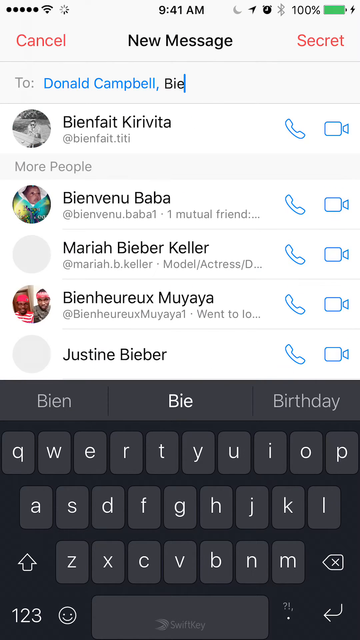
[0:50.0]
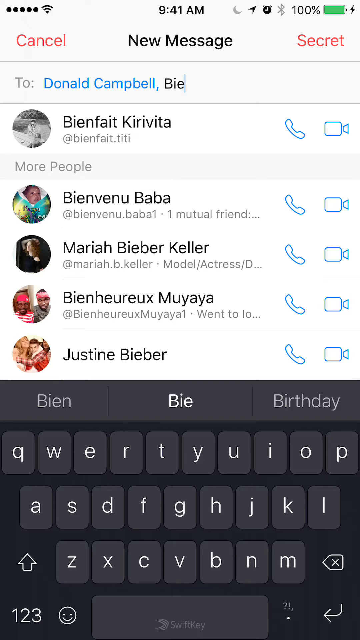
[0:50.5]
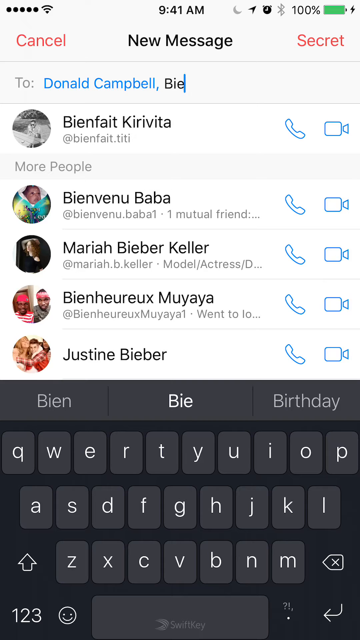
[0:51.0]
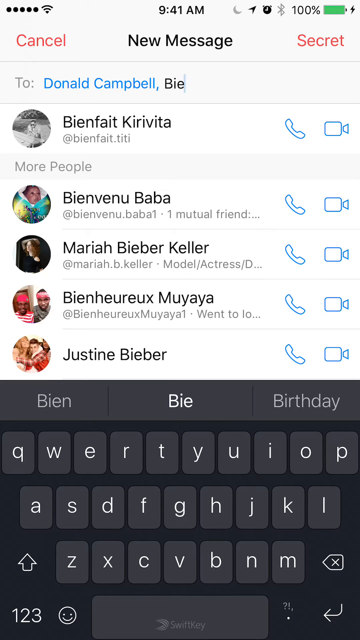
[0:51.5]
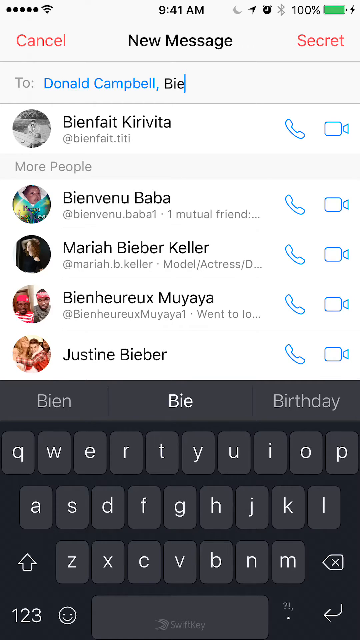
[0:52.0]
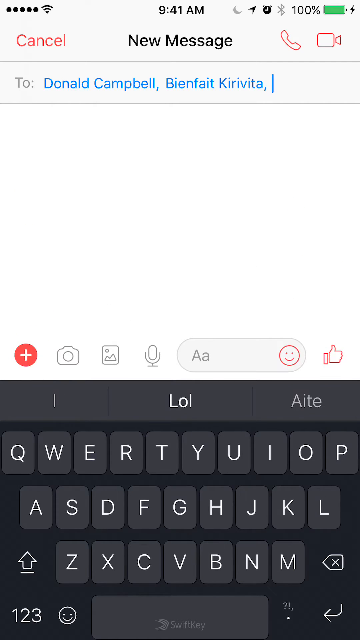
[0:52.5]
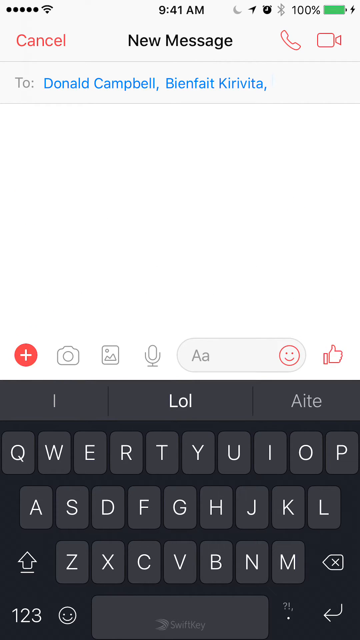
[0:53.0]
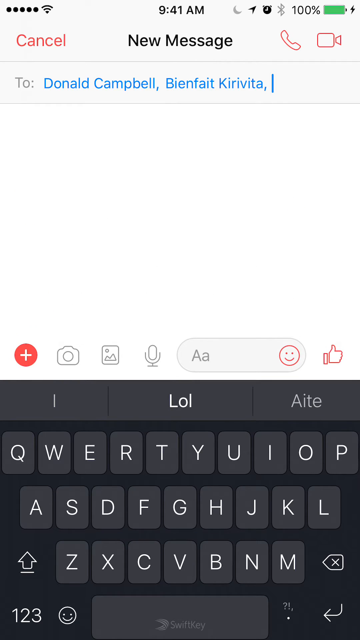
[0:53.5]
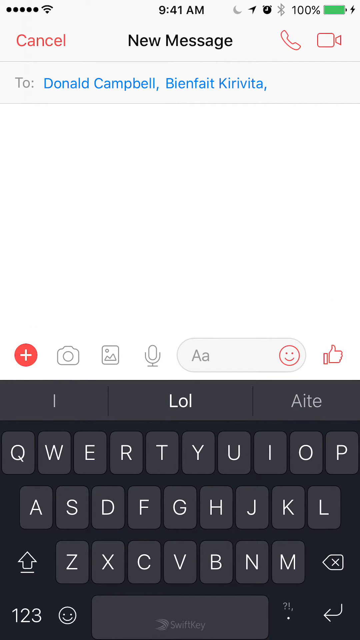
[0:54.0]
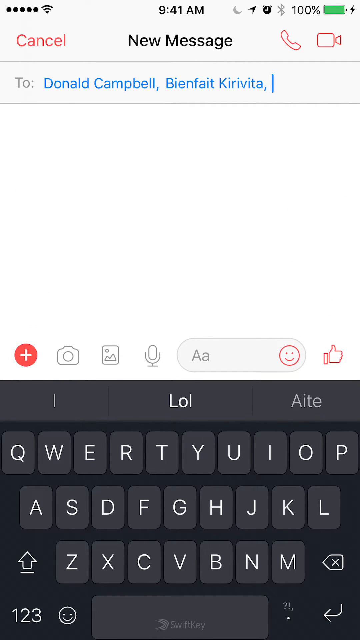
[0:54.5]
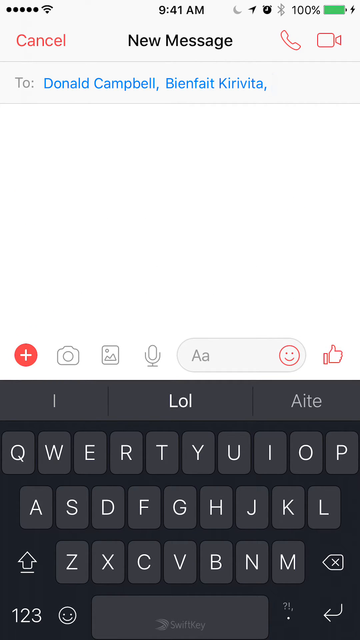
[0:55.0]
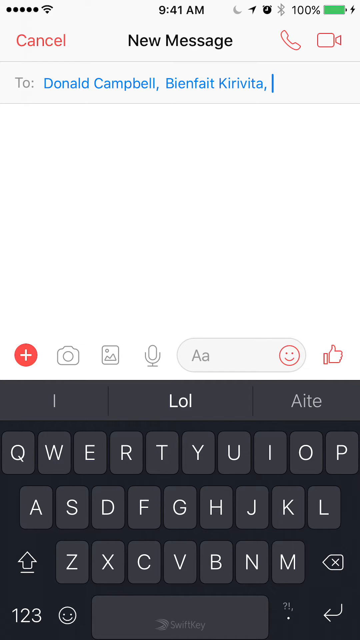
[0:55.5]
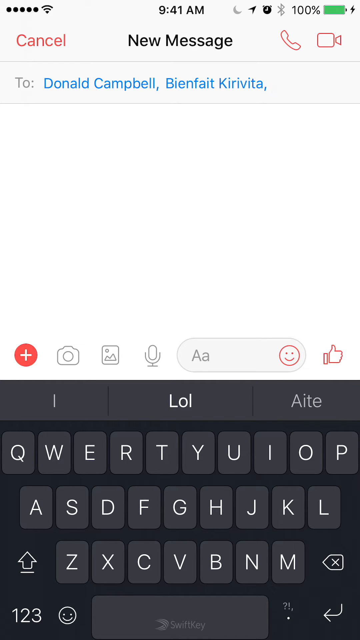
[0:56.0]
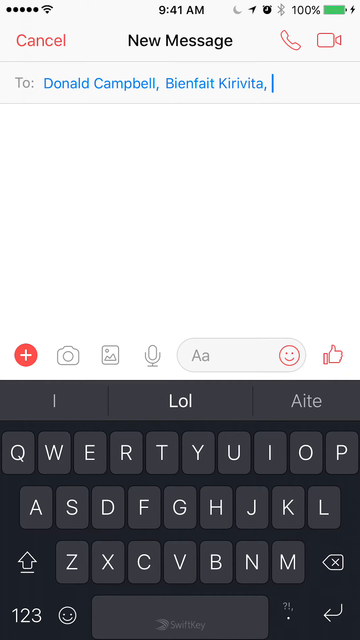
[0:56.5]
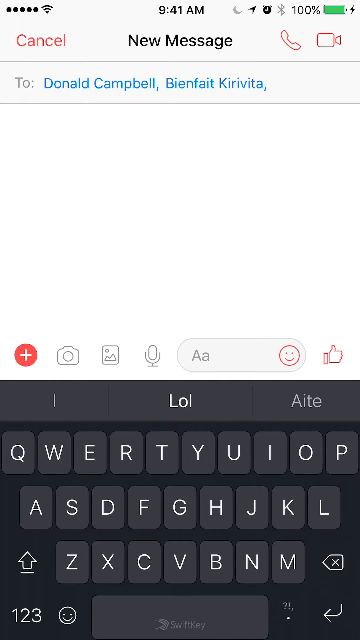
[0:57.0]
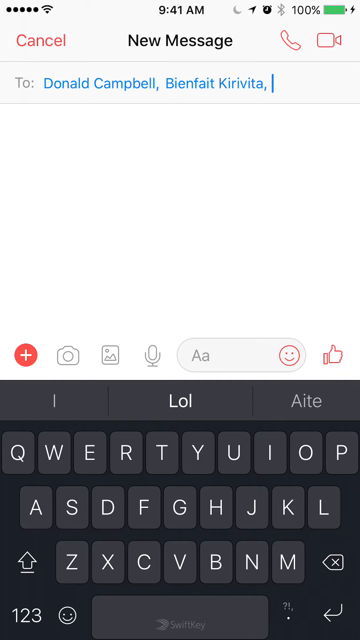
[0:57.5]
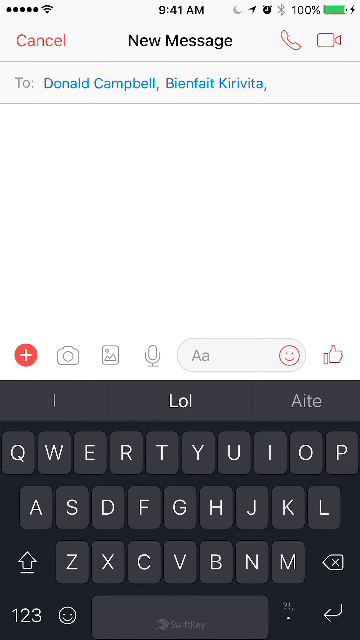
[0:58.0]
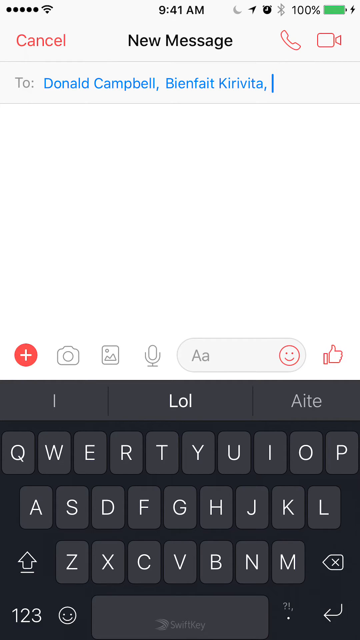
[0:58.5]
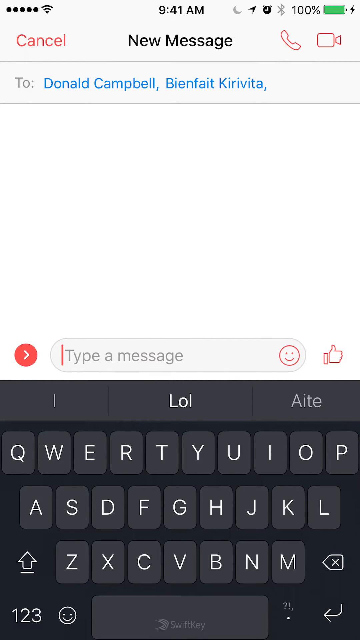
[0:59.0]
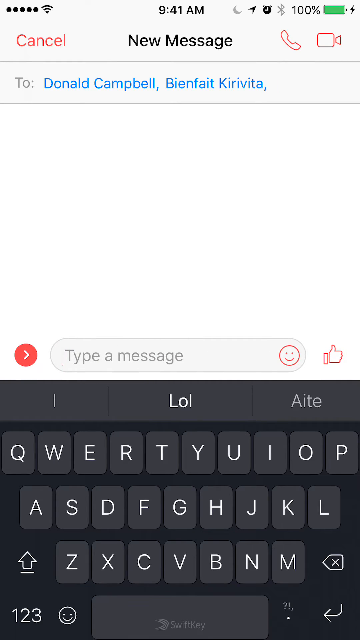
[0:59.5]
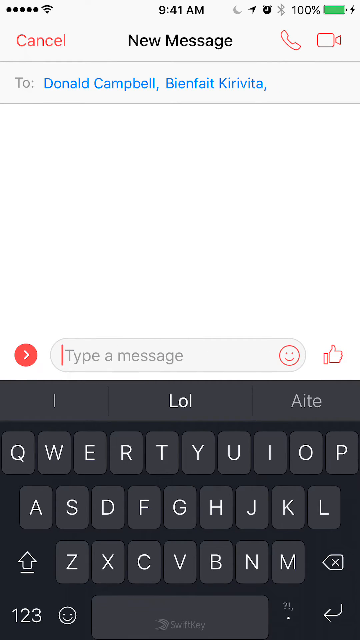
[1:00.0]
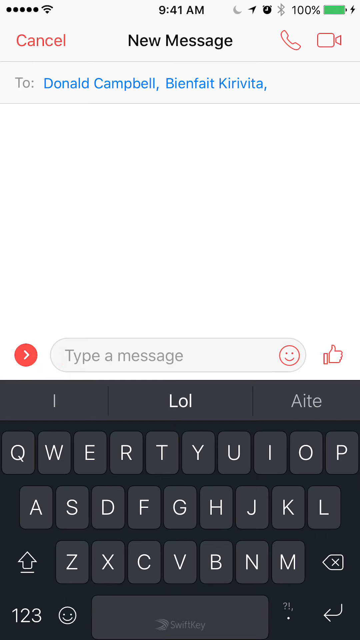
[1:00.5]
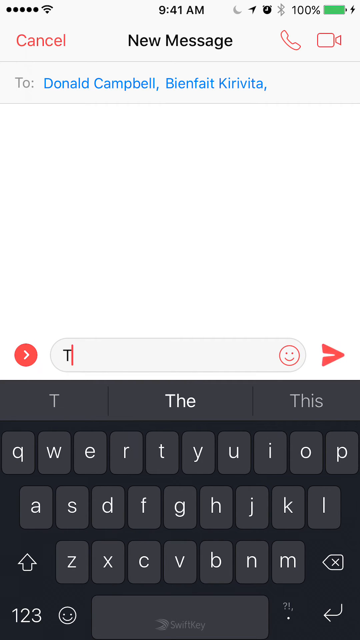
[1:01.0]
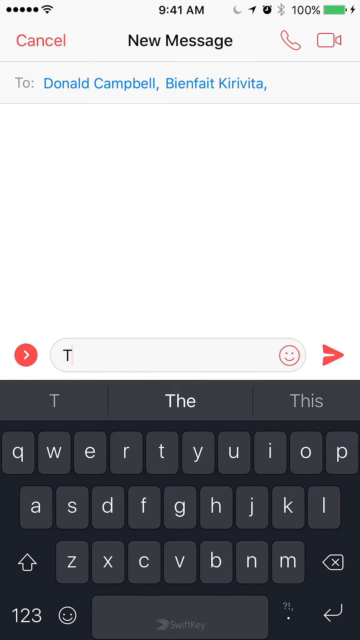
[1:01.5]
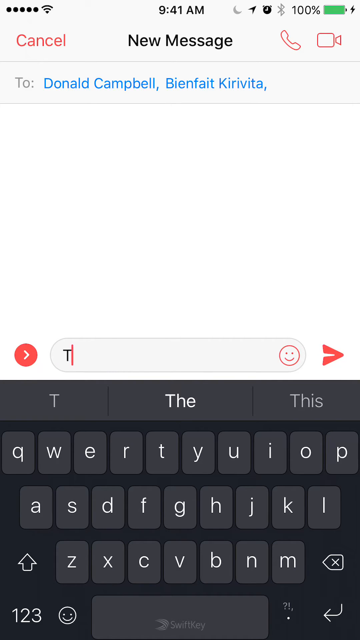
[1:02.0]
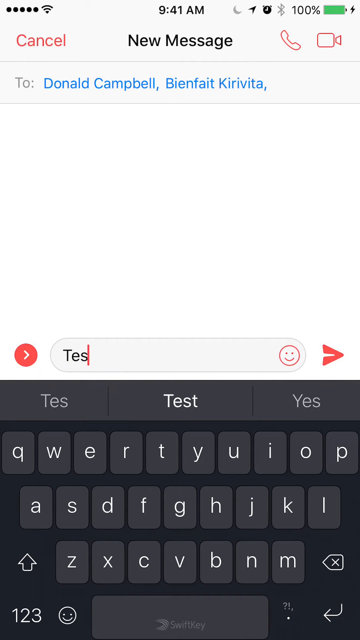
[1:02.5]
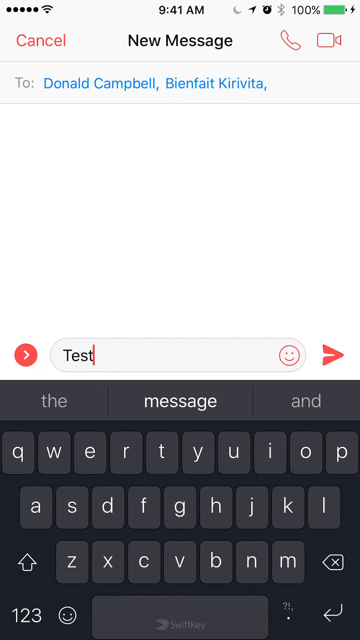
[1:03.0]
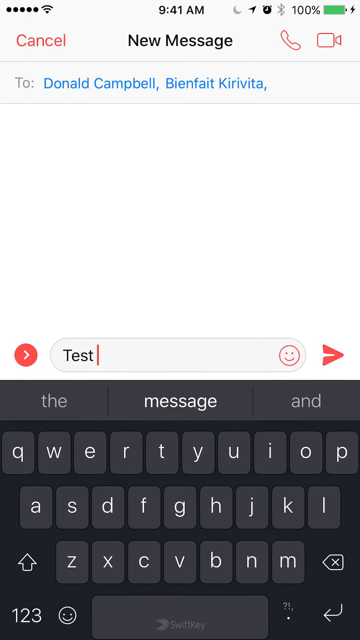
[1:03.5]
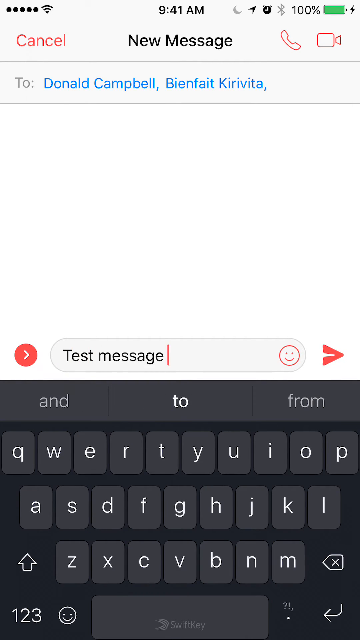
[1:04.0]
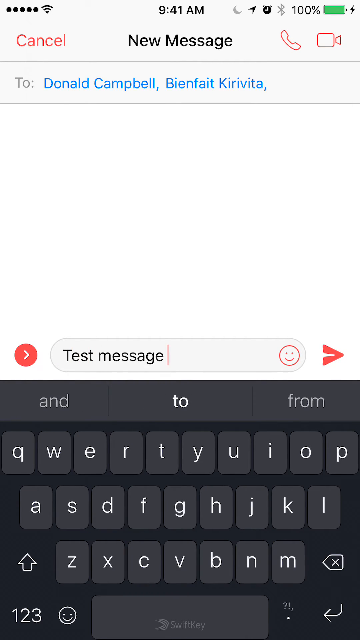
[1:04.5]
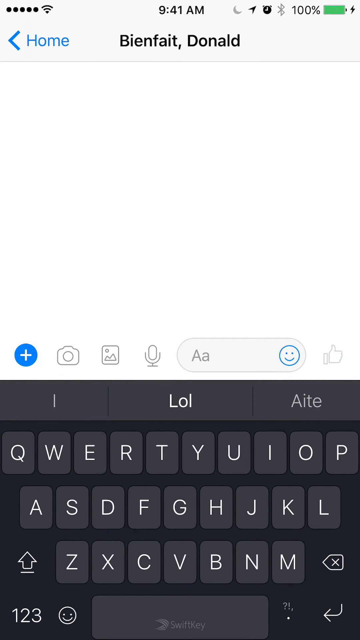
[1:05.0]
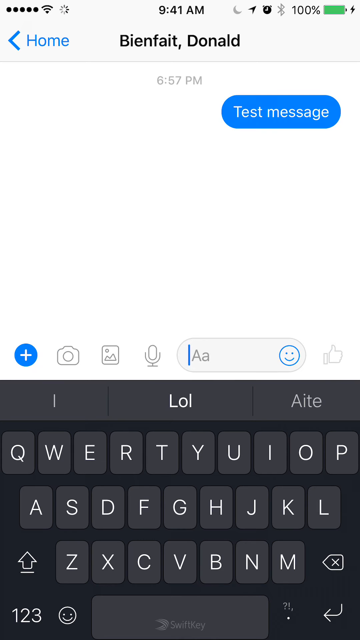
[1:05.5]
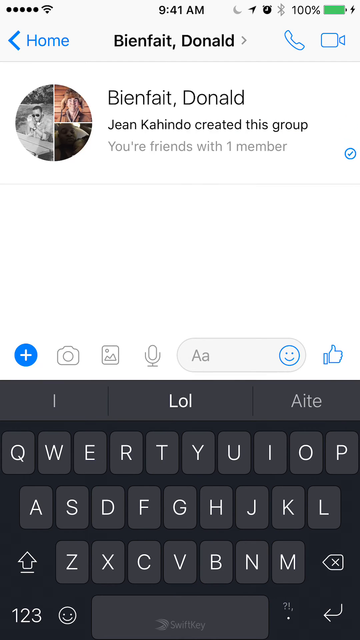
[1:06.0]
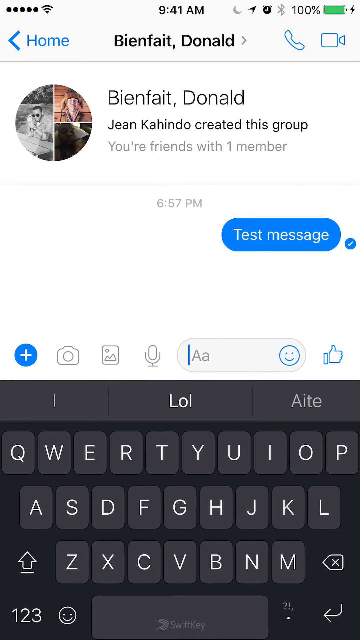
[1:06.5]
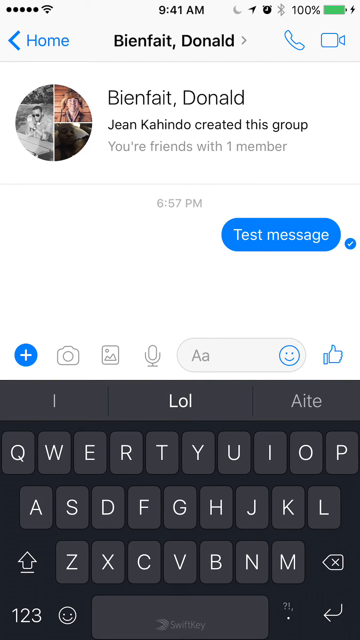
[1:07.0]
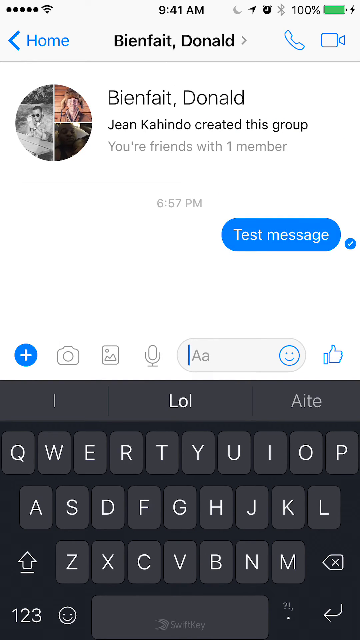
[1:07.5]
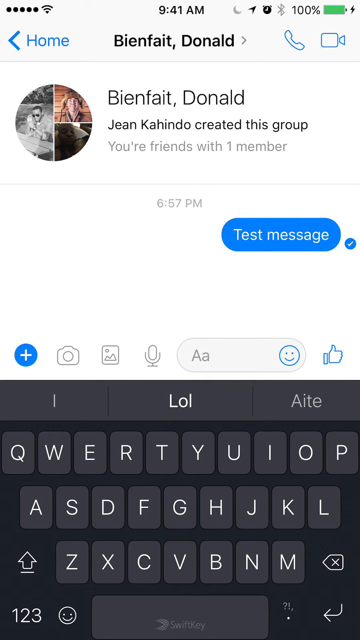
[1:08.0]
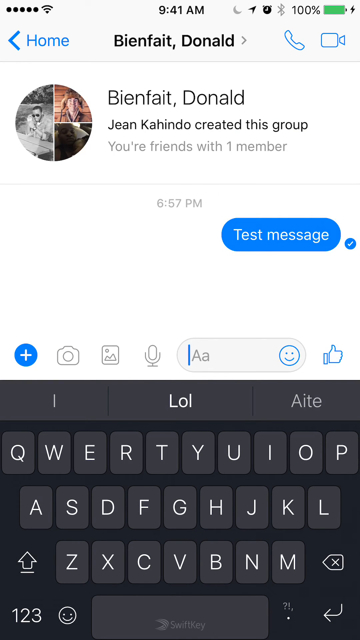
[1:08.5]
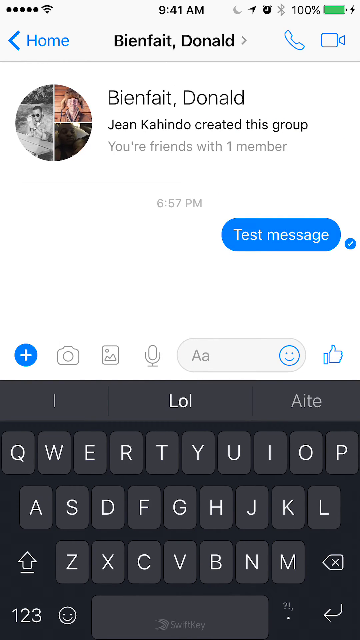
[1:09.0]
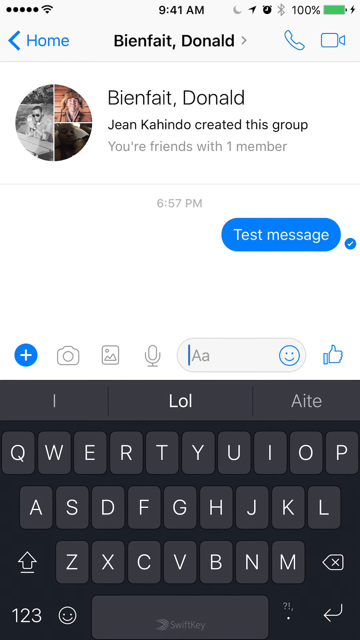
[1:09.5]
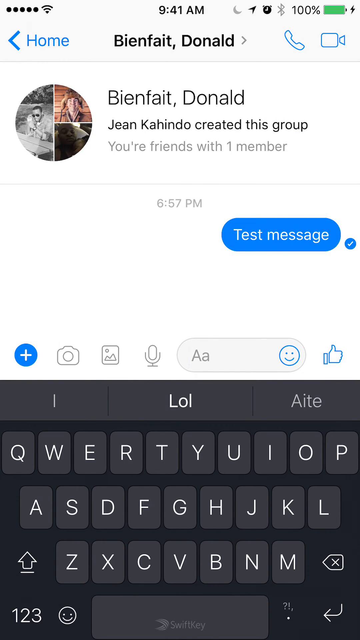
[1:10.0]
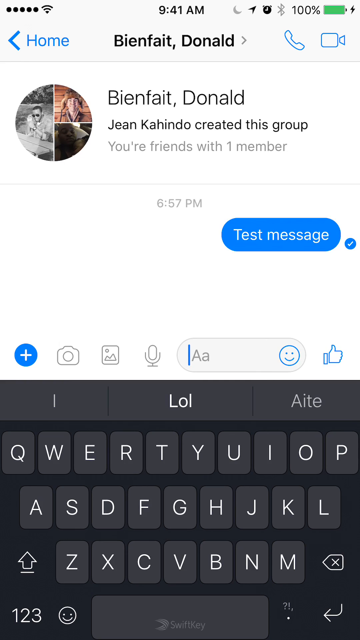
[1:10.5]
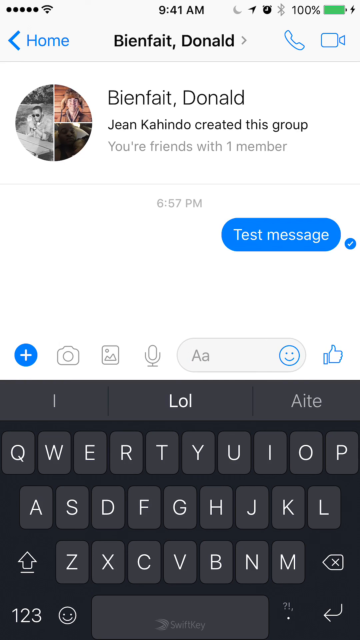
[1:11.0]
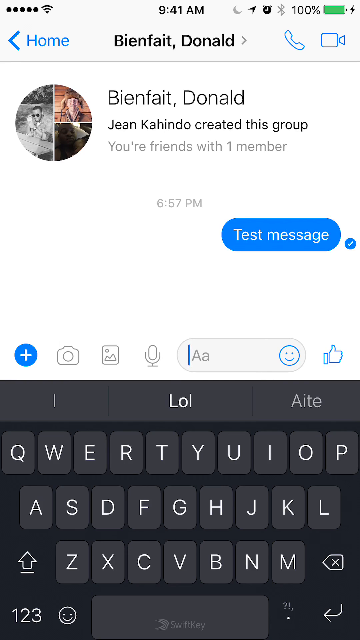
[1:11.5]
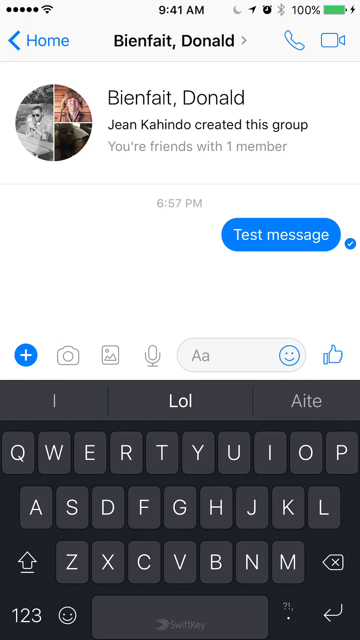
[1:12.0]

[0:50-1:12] What looks like a screen capture of an iPhone shows the messages application, with "new message" at the top, a cancel button and a secret button. The to input field contains blue text reading "Donald Campbell", followed by "bie", and there appears to be a gray keyboard at the bottom. With "bie" typed, a name pops up at the bottom reading Bienfait Kiribita, which is apparently tapped, so the to field now has Don Campbell and Bienfait Kiribita. A message is then typed on the gray keyboard, "test message", and sent to these two people. The screen changes, reading "... created this group" and "you're friends with one member". Below that is a blue bubble reading "test message", with the gray keyboard below. Apparently a test message has been typed to two people in messages.